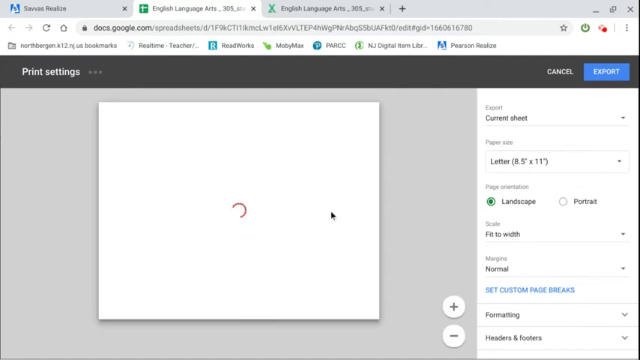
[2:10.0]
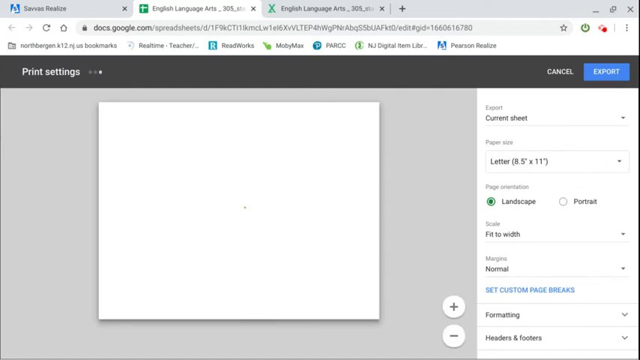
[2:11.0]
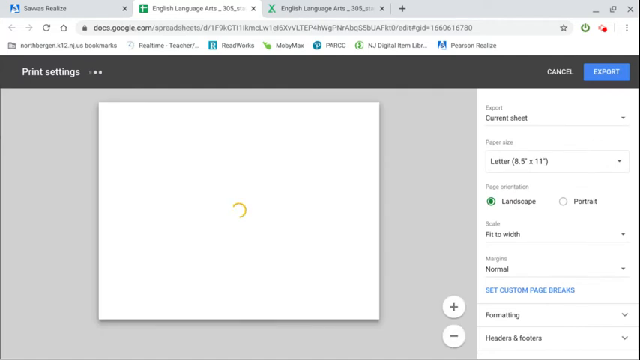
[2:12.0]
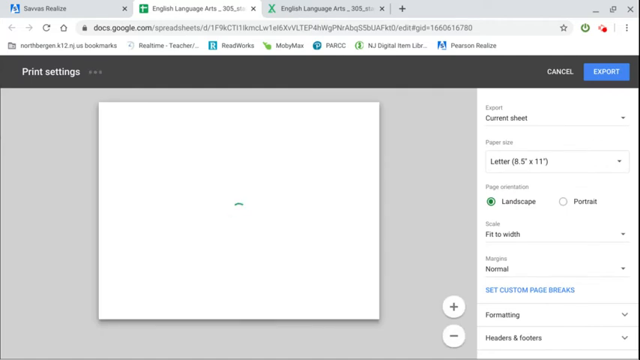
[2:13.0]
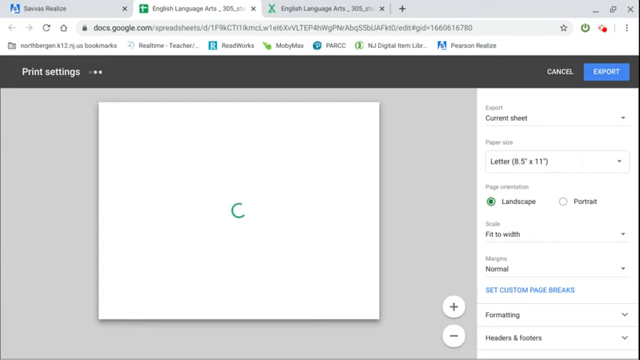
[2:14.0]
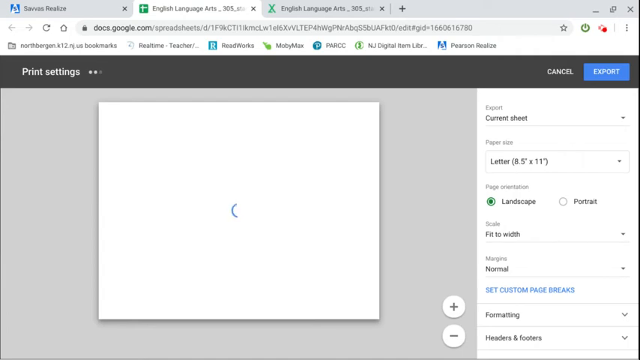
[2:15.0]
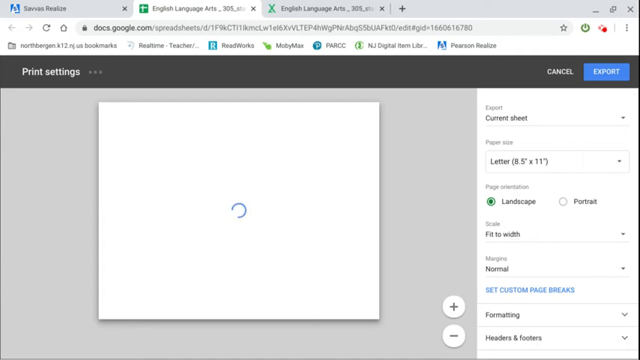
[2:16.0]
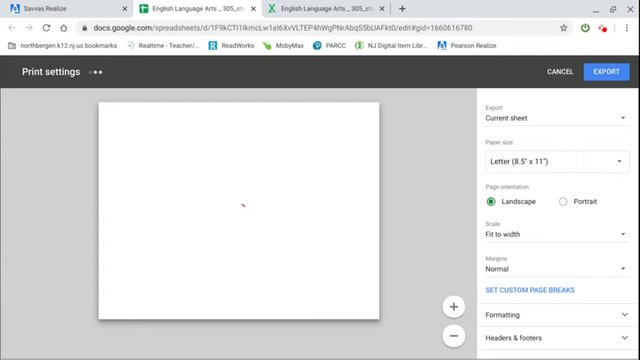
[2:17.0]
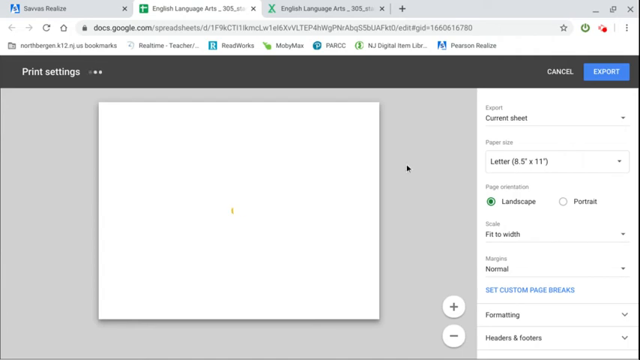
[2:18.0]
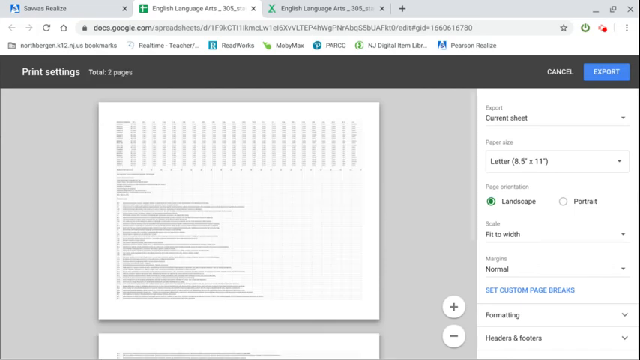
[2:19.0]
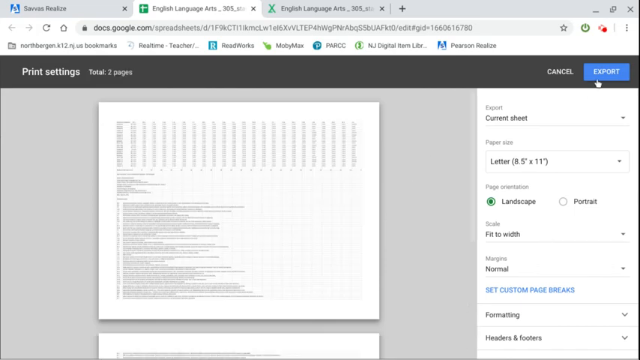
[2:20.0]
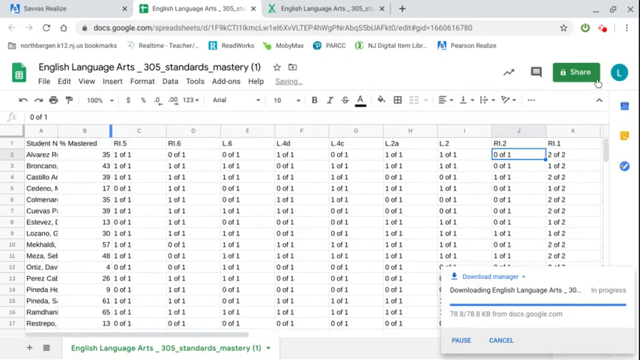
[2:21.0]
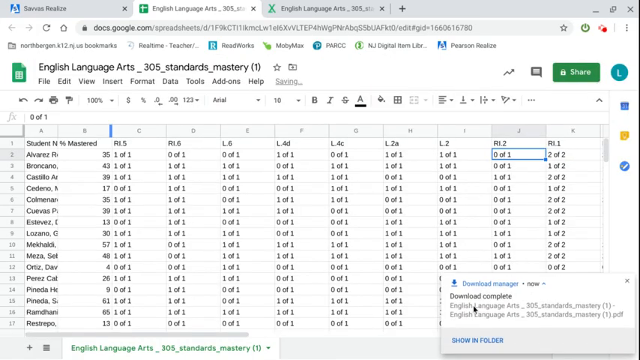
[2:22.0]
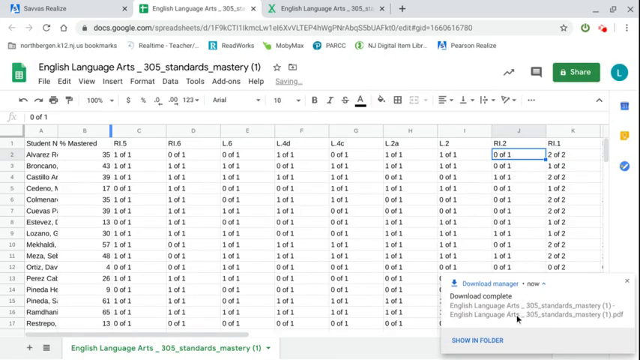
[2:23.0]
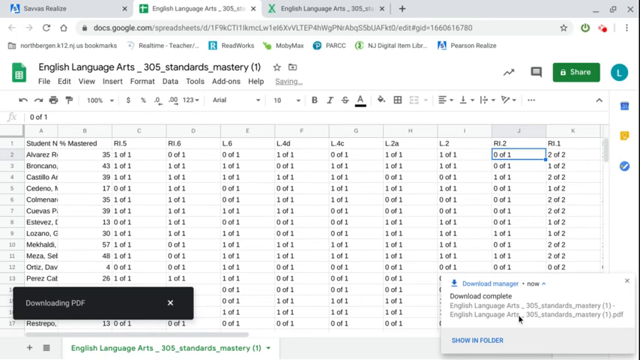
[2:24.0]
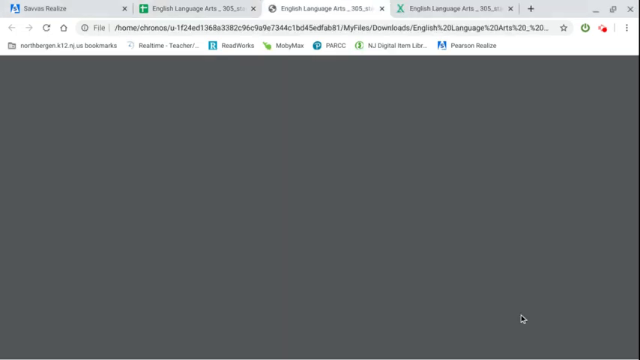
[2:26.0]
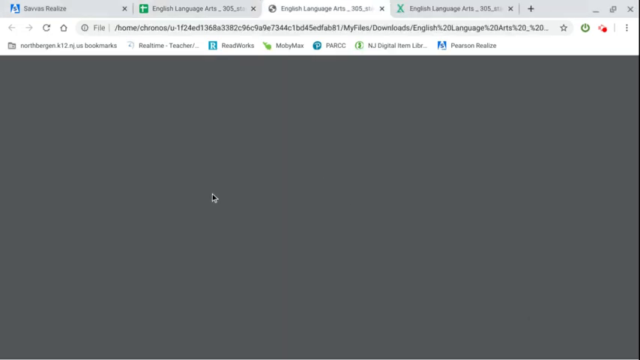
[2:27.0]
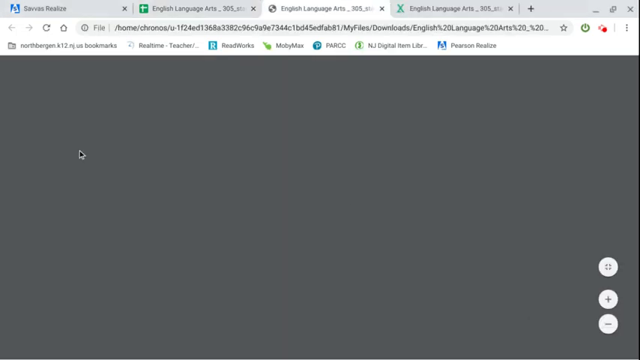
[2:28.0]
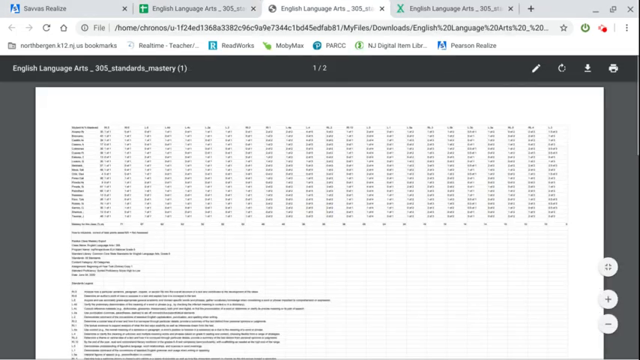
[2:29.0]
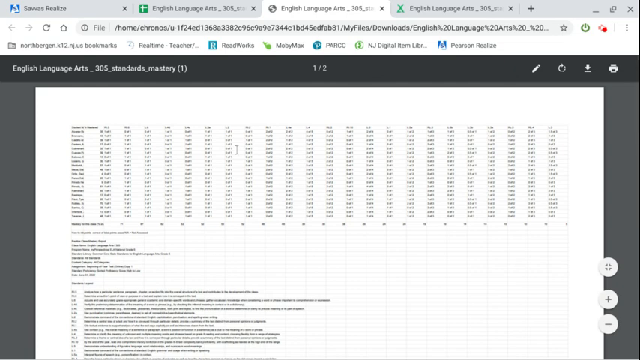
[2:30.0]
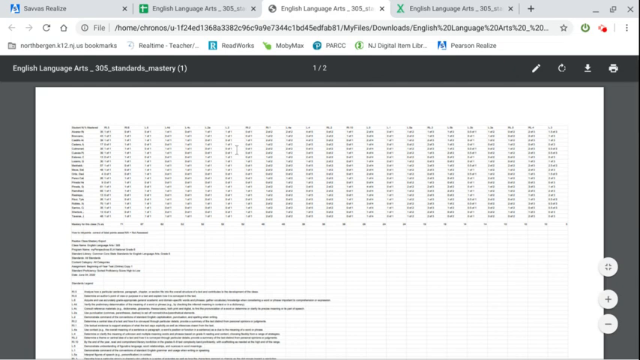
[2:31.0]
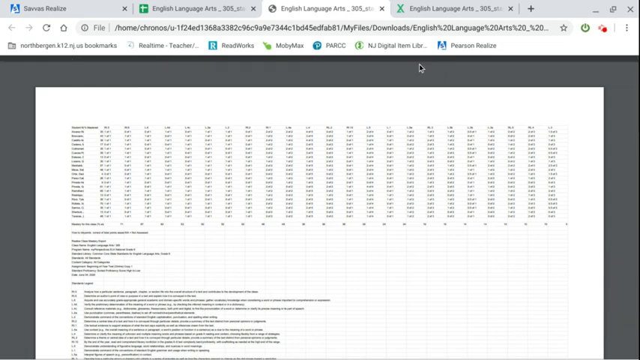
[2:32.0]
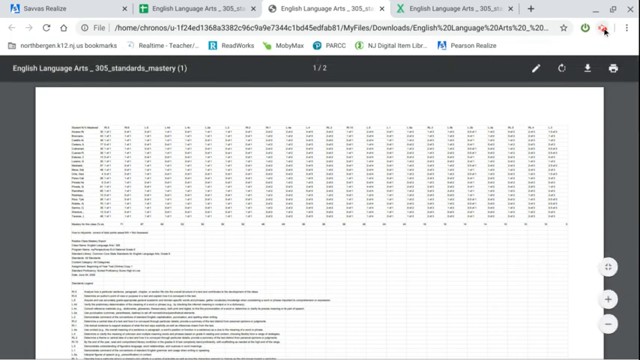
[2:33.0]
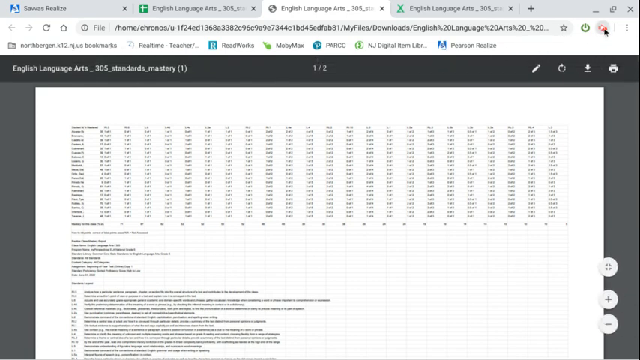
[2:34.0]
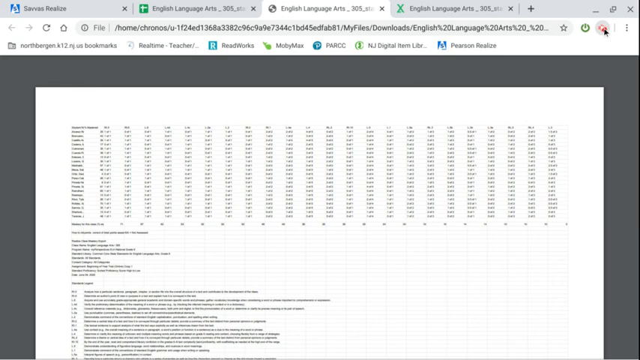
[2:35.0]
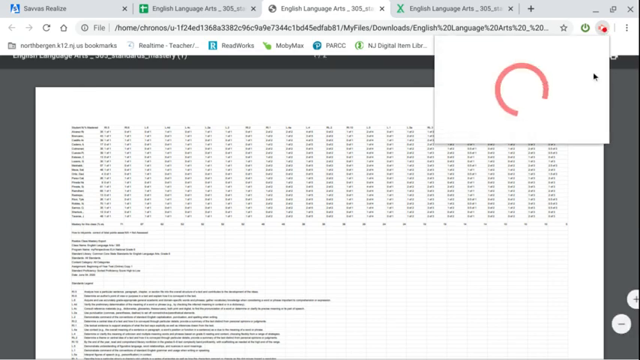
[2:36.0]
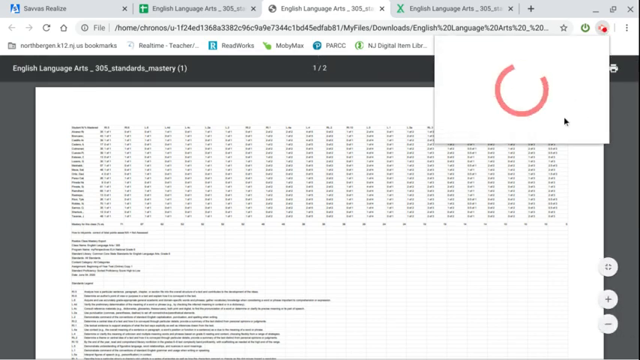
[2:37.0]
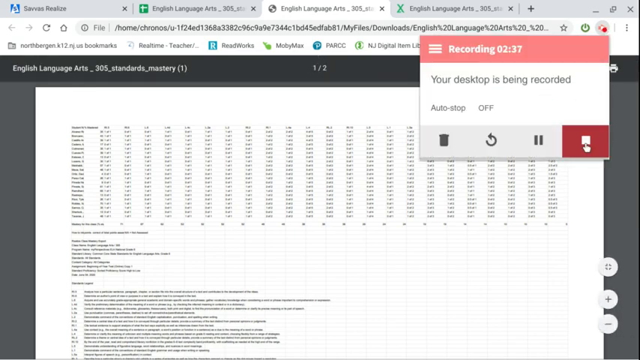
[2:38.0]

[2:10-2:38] The PDF preview takes a little time to load, then the file is exported and the PDF is downloaded. The PDF is opened and browsed a little; it looks very tough to read because the writing is very small. The desktop recording control in the top right is then selected and the recording is ended.